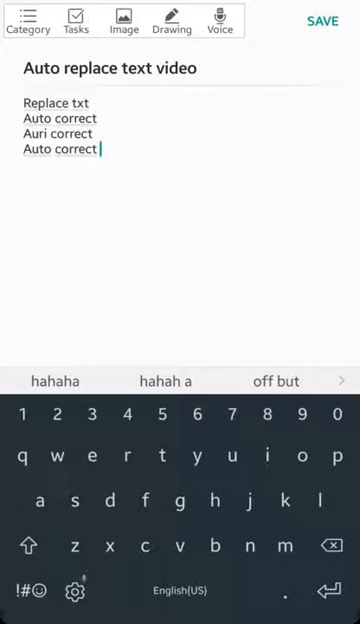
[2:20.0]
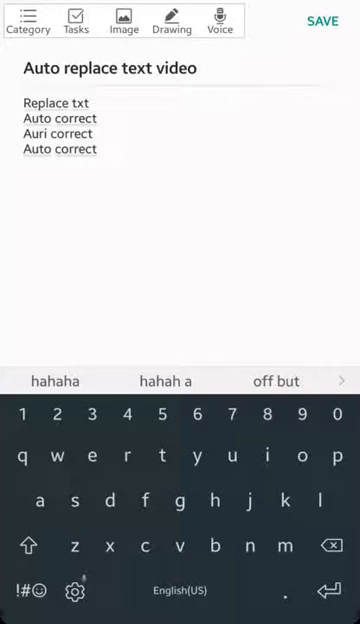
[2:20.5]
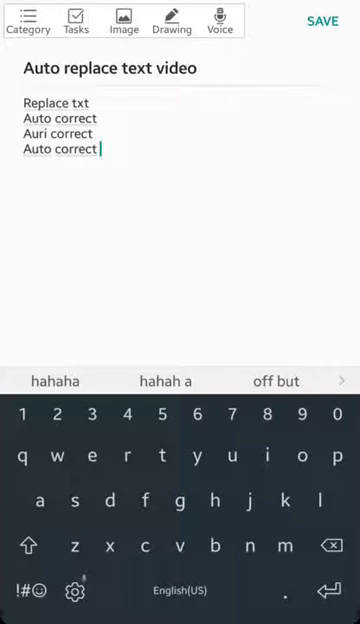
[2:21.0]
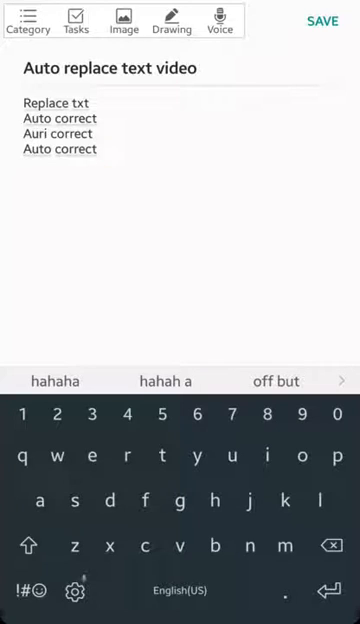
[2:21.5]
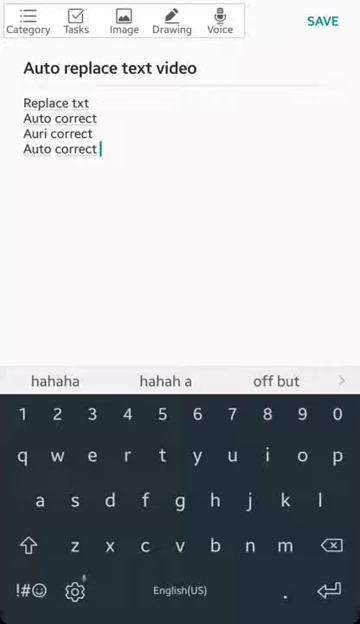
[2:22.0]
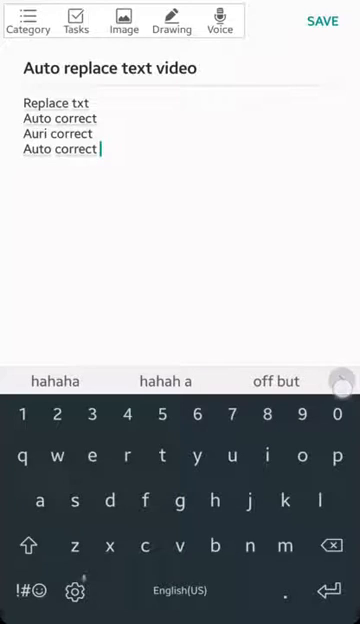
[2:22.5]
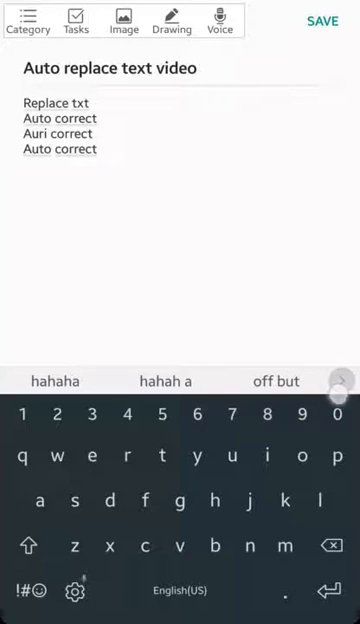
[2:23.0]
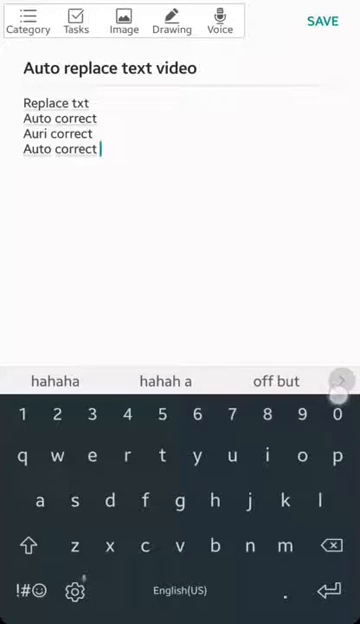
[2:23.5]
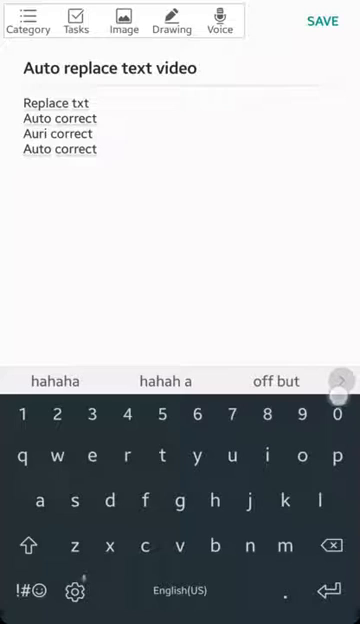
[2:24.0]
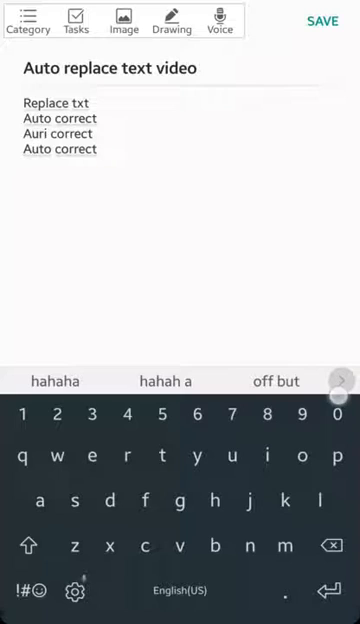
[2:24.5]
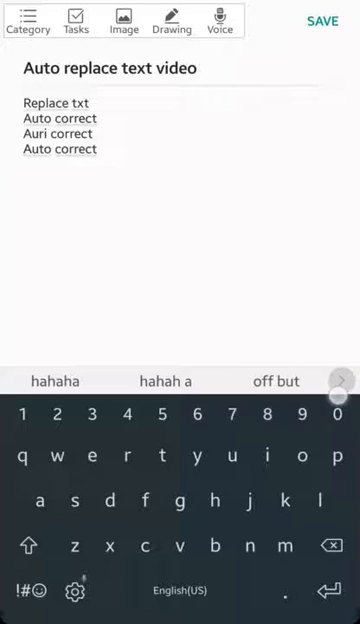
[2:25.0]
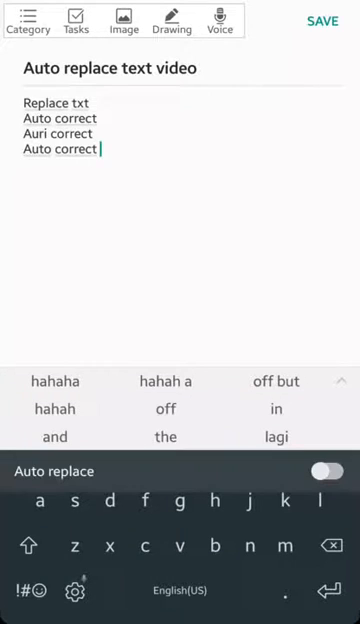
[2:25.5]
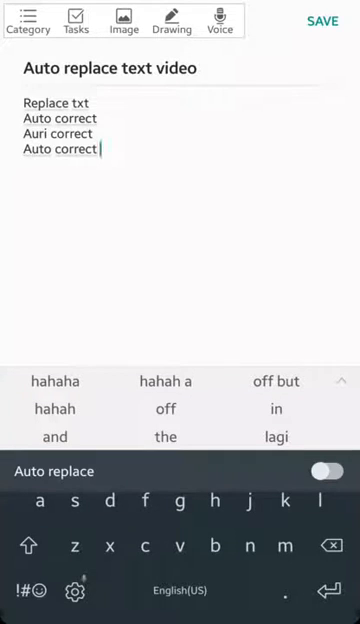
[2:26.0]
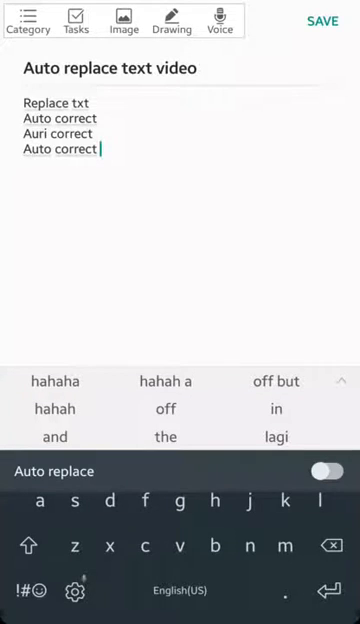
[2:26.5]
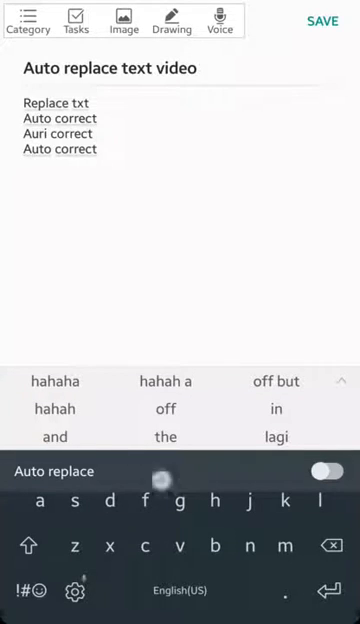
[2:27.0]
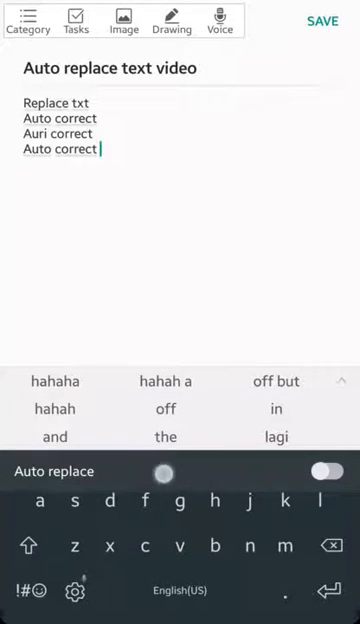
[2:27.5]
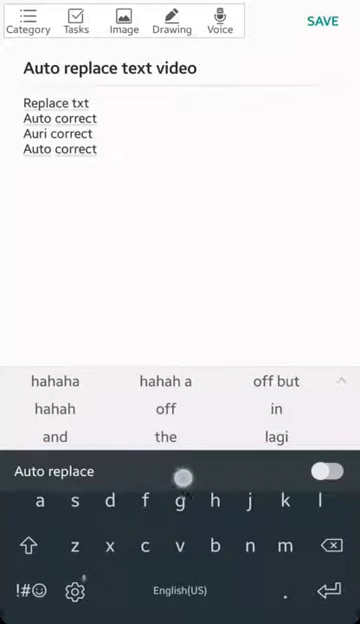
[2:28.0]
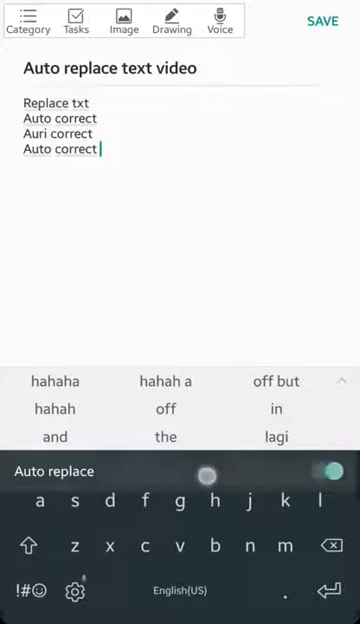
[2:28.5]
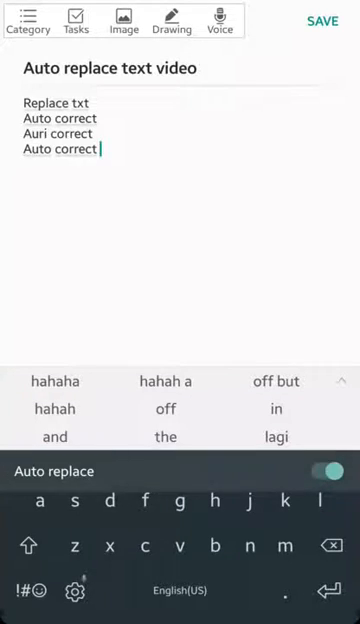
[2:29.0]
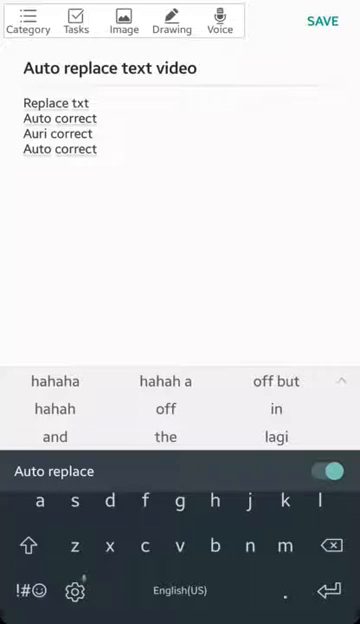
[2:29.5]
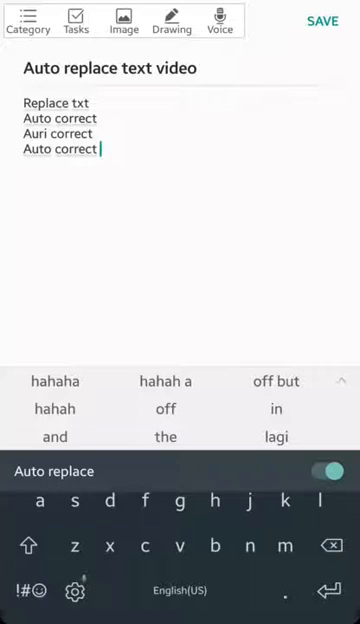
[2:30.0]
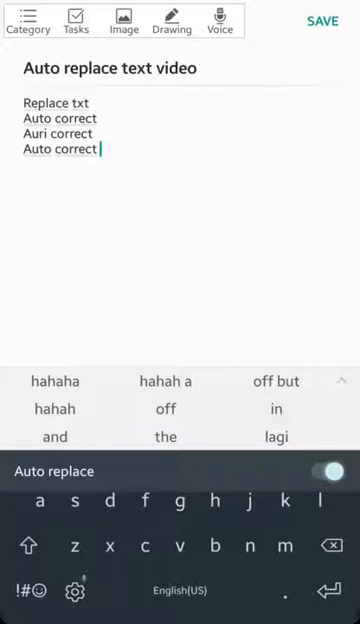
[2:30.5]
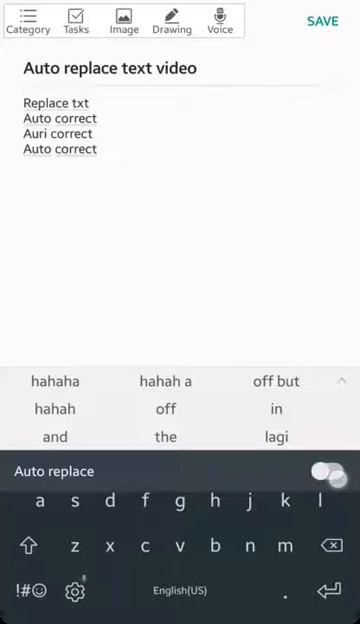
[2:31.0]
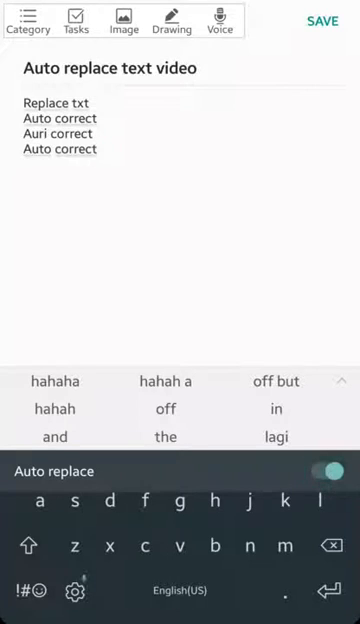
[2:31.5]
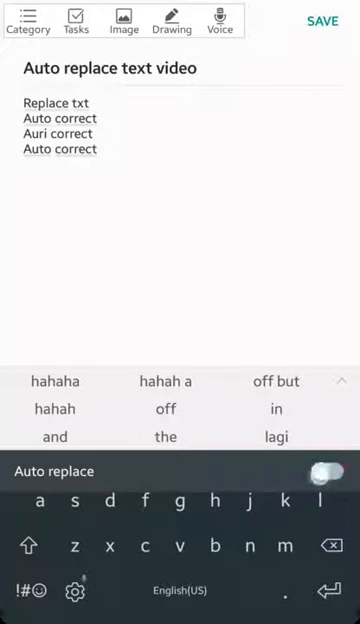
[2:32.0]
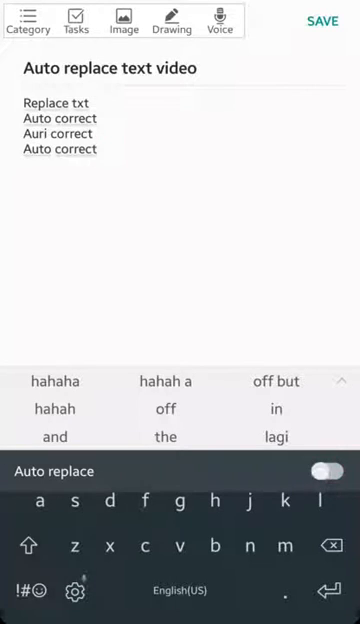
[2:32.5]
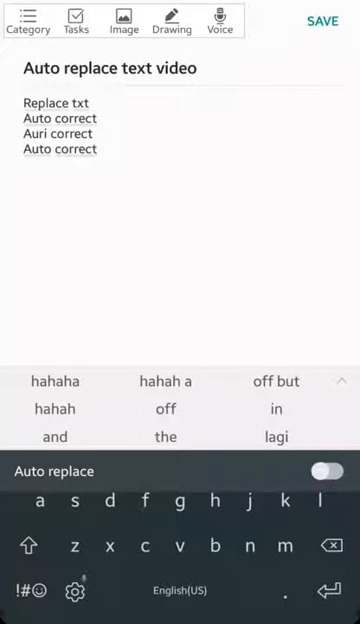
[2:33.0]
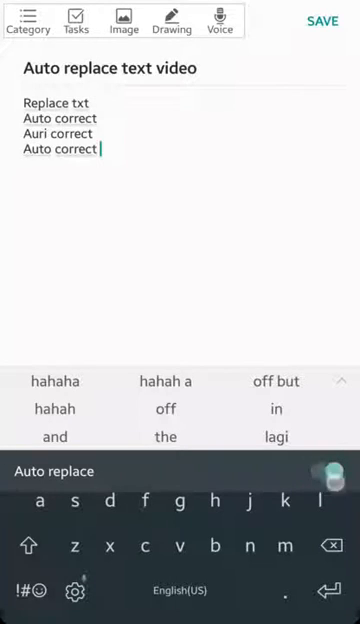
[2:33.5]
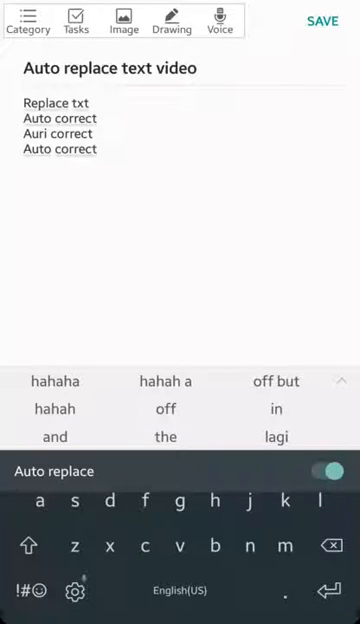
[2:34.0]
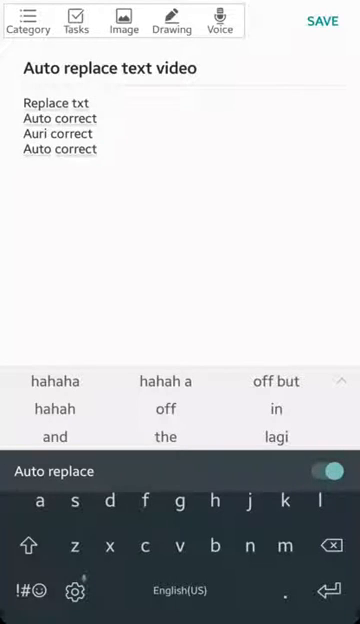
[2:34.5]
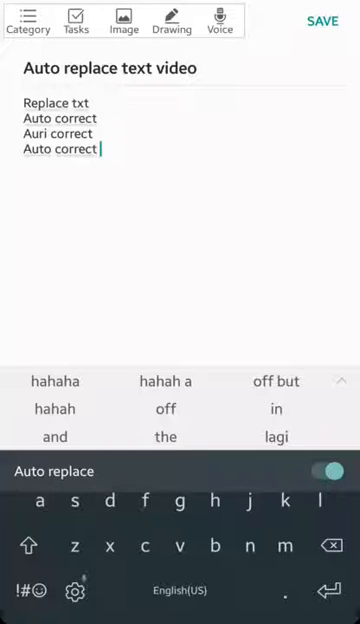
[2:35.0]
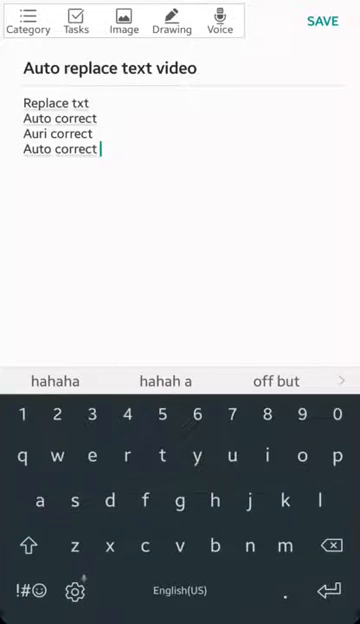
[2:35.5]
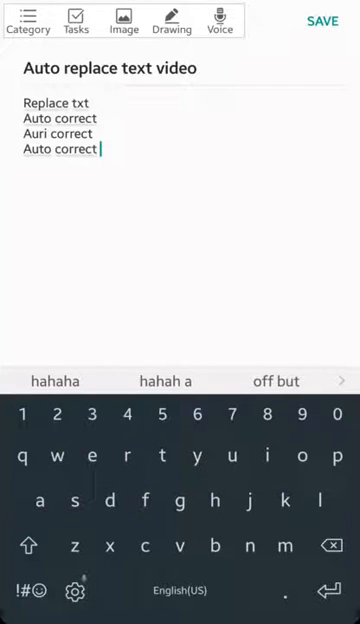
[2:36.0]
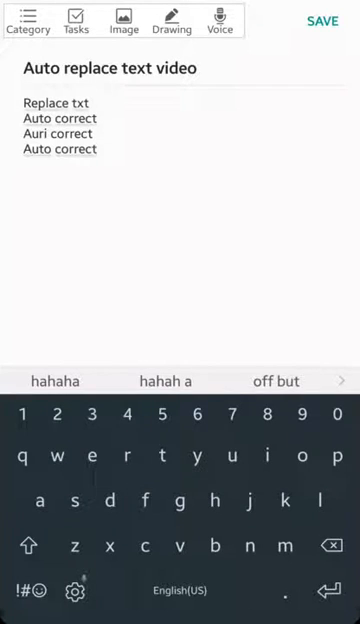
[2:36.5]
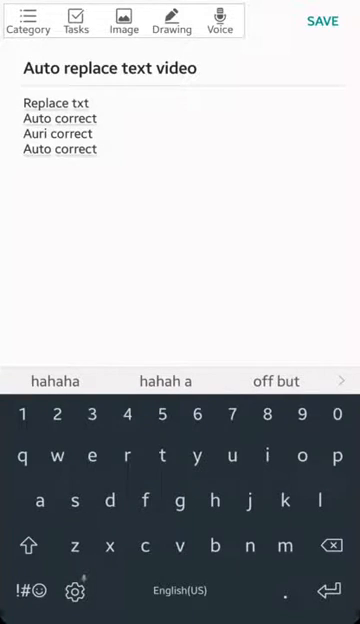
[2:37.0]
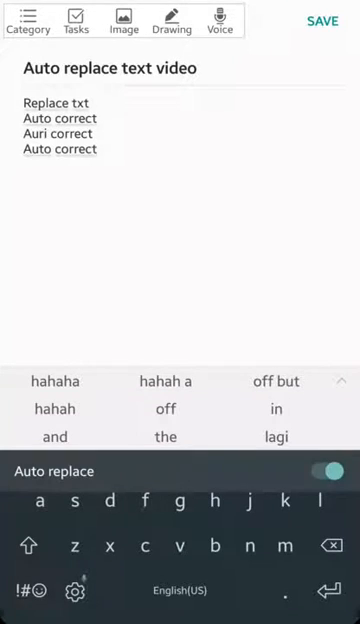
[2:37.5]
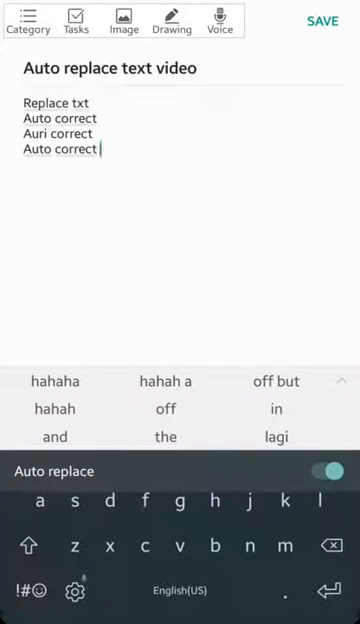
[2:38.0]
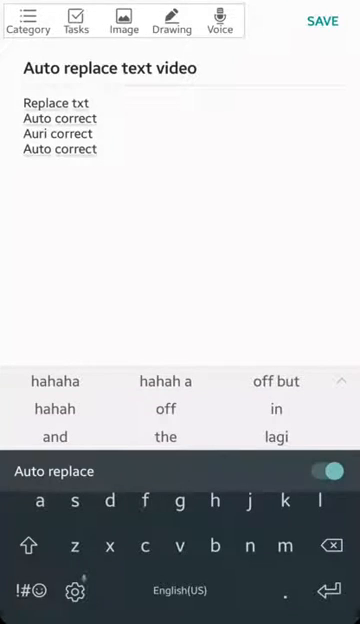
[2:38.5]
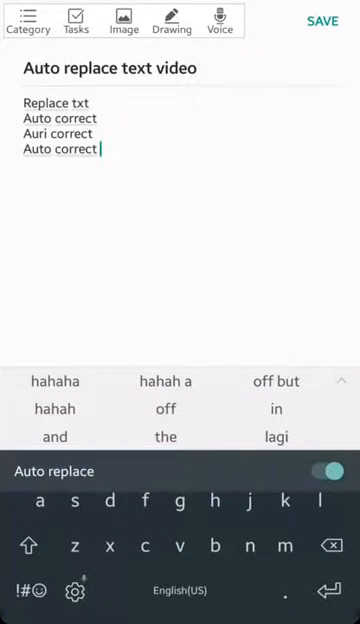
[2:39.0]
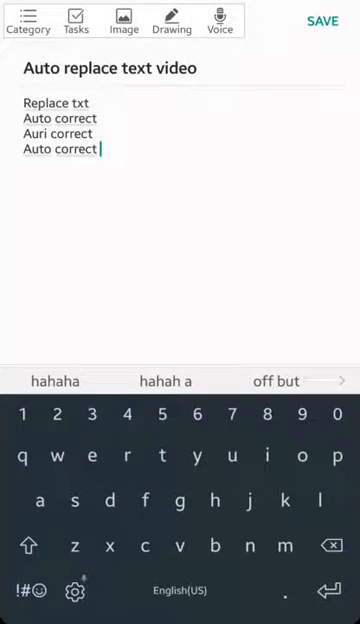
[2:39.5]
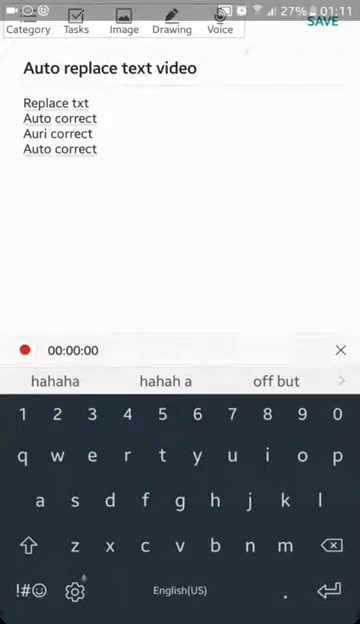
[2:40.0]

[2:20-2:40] The memo screen shows the four terms typed earlier. The cursor is near the suggested text area. The user clicks an area that expands the section, revealing nine suggested text options. The user then hovers over a space below it that says "auto replace," which is toggled on, with the toggle button on the right. The user toggles it off, on, off, and back on. The suggested text options remain on the screen, and the user briefly clicks the top of the phone screen; some icons appear and quickly disappear, and the video ends.